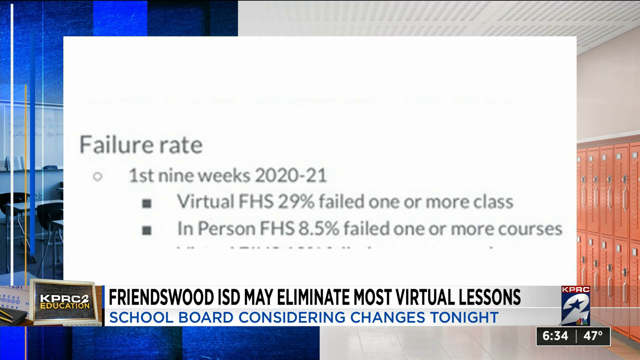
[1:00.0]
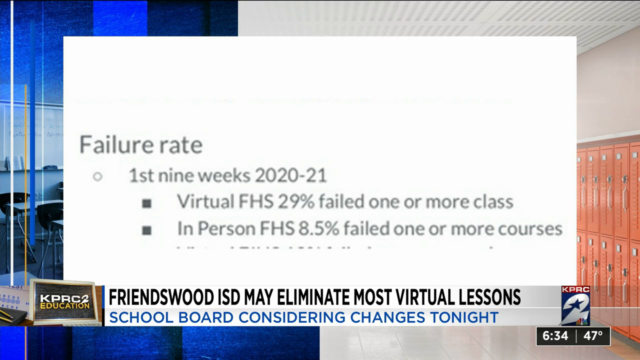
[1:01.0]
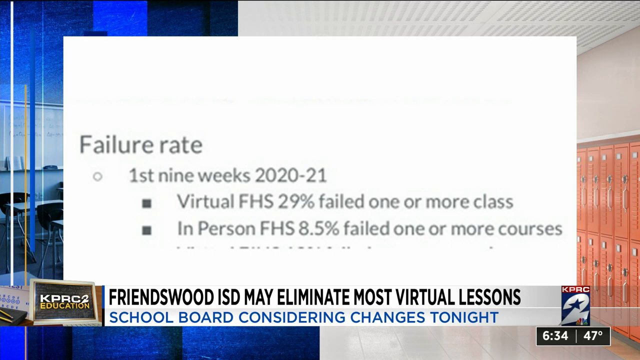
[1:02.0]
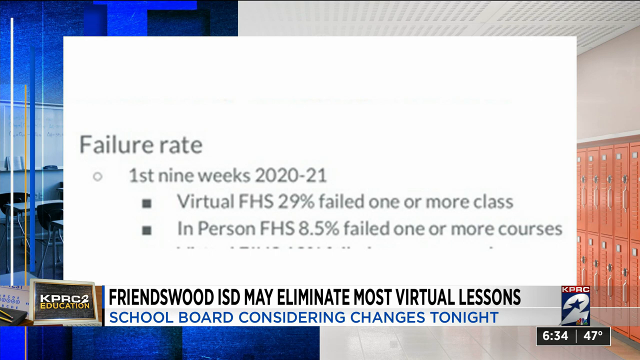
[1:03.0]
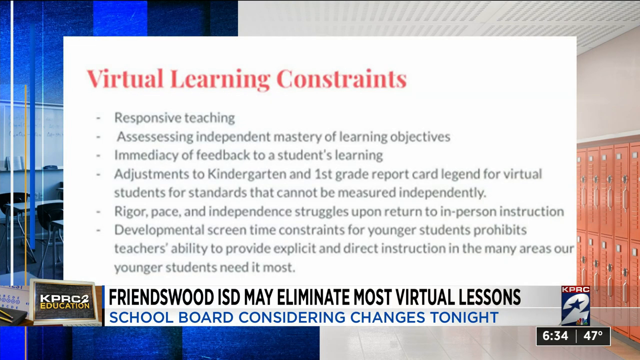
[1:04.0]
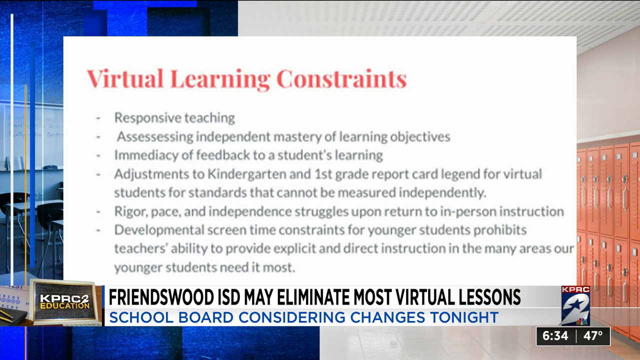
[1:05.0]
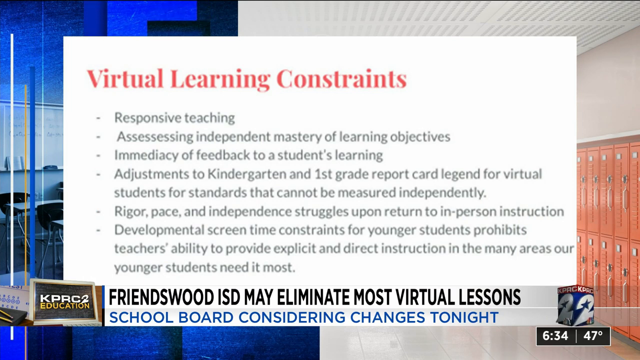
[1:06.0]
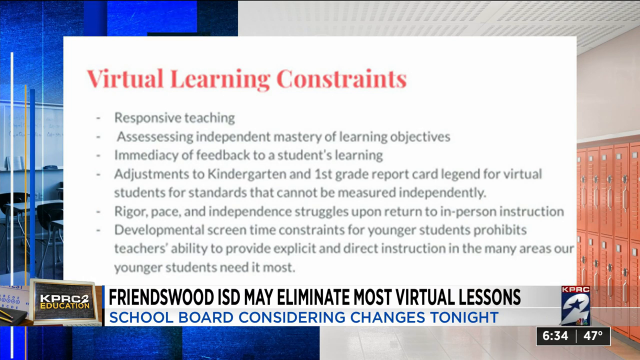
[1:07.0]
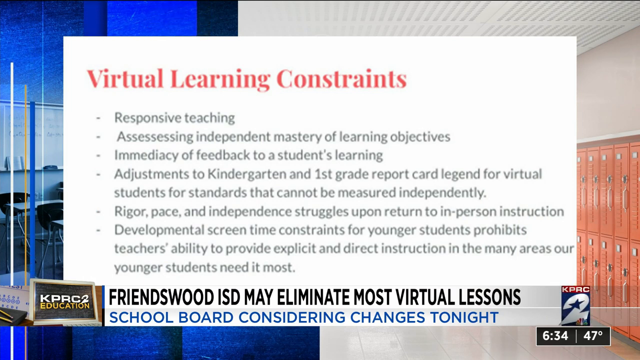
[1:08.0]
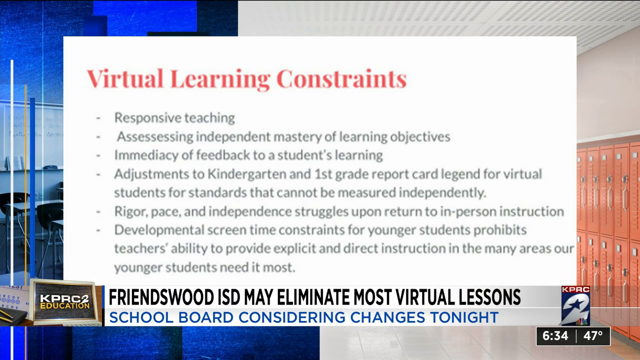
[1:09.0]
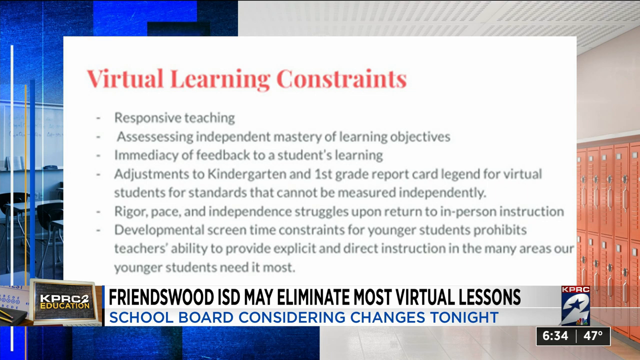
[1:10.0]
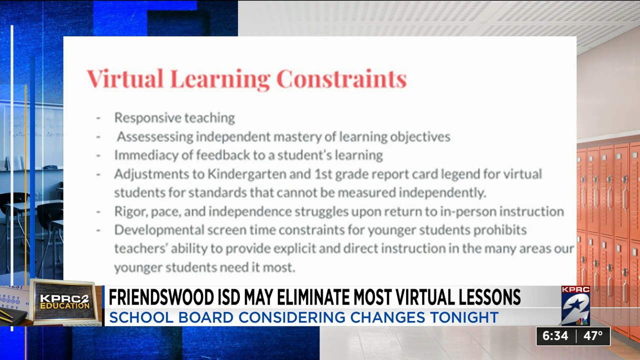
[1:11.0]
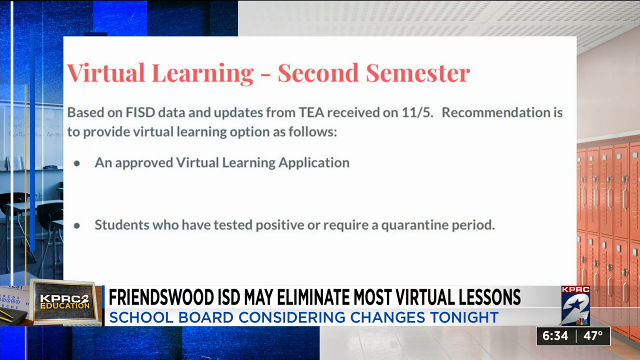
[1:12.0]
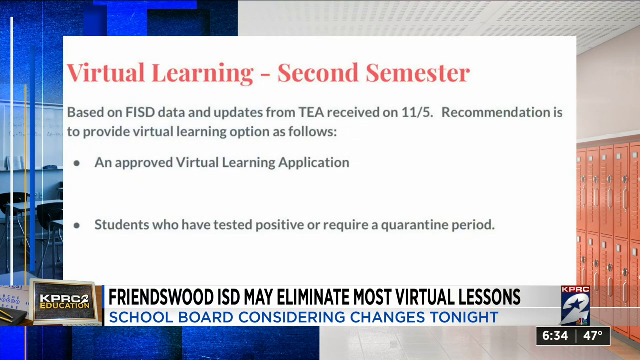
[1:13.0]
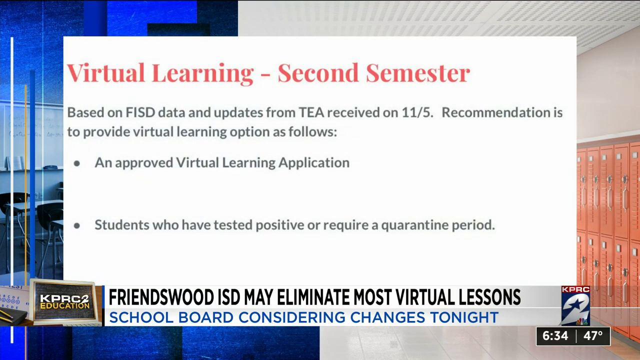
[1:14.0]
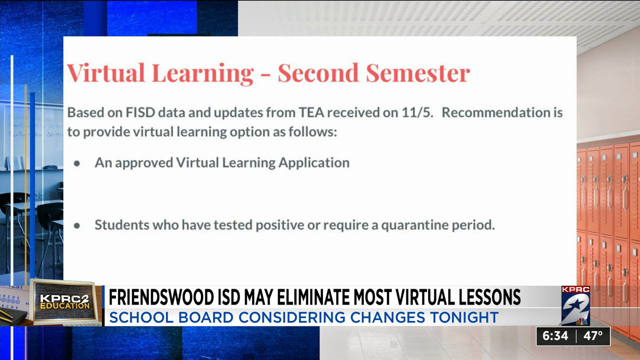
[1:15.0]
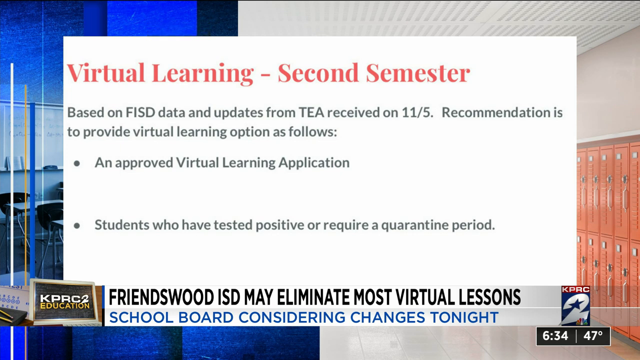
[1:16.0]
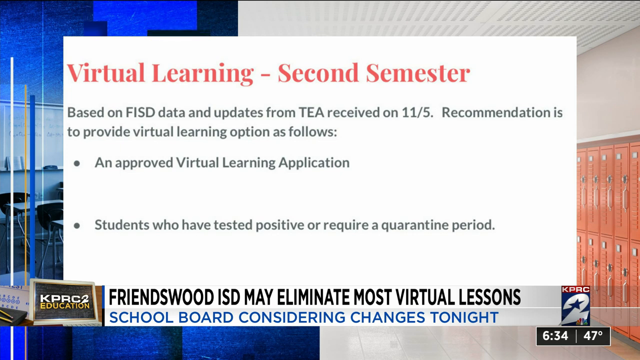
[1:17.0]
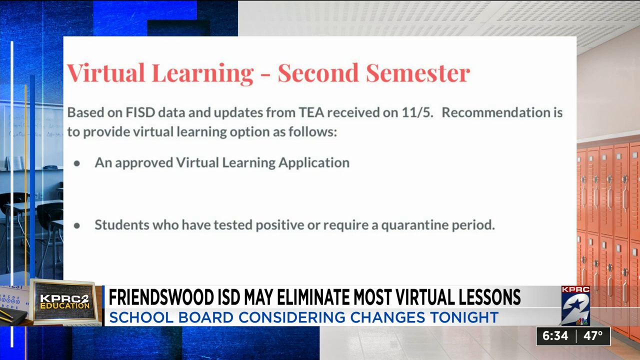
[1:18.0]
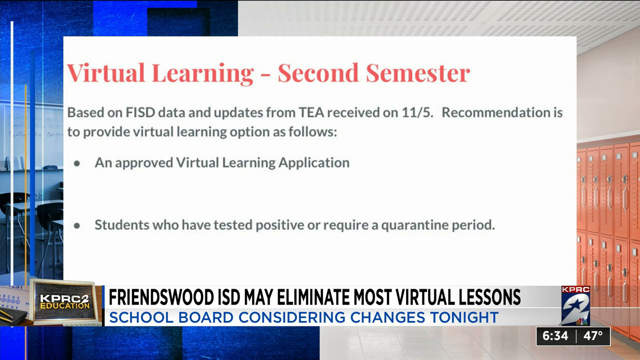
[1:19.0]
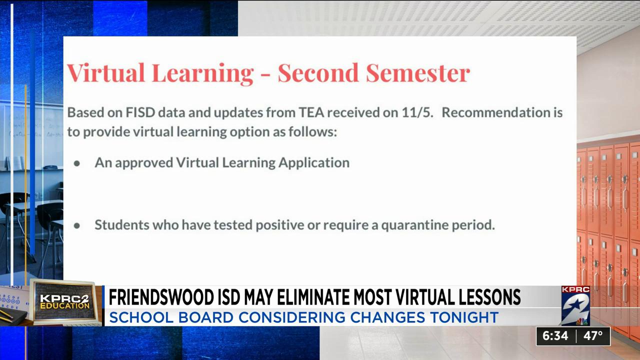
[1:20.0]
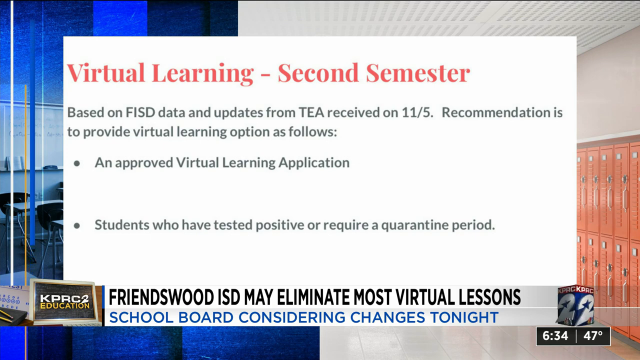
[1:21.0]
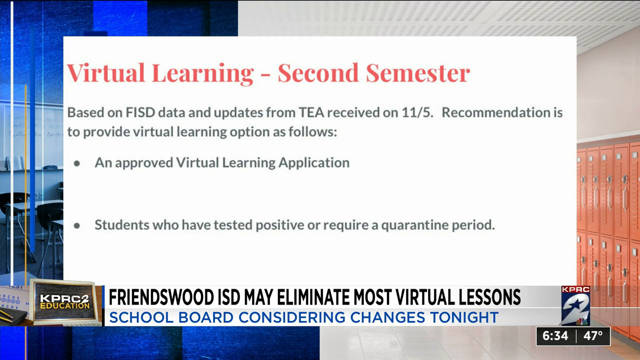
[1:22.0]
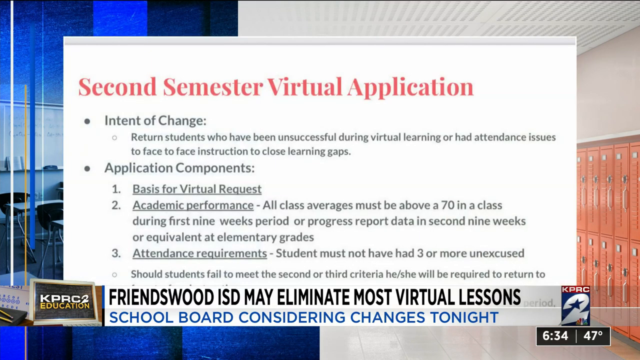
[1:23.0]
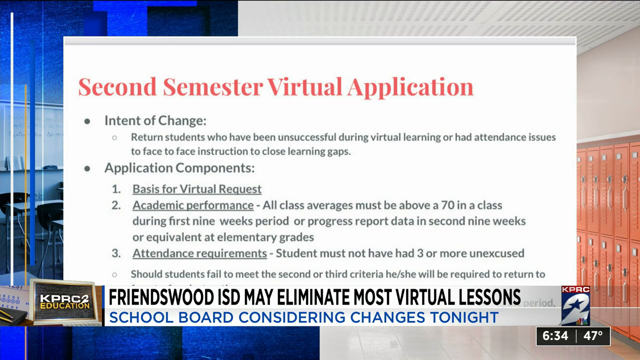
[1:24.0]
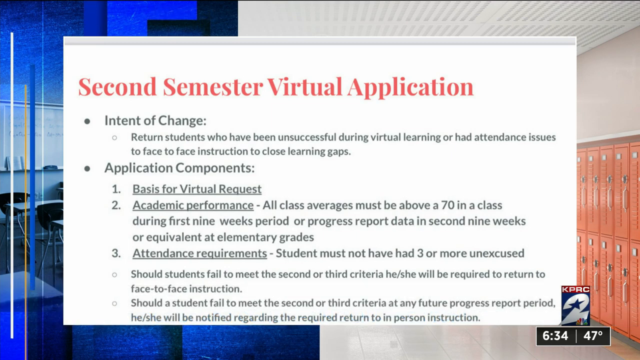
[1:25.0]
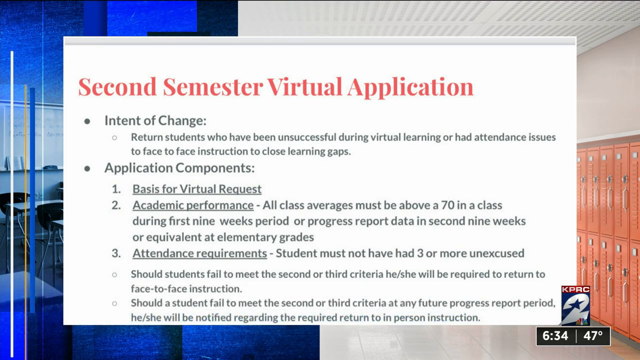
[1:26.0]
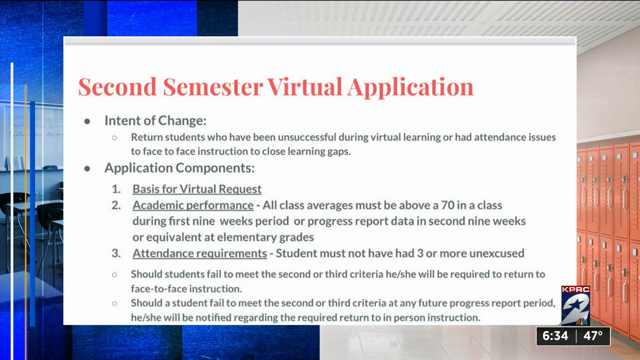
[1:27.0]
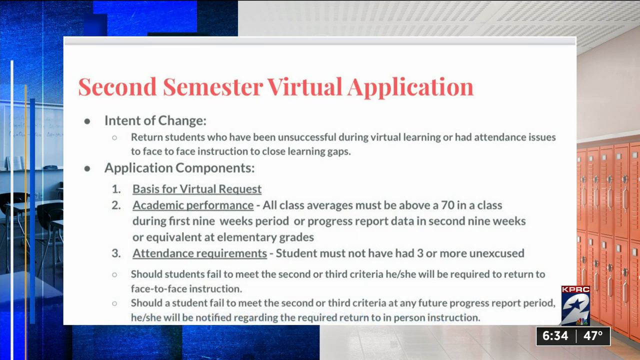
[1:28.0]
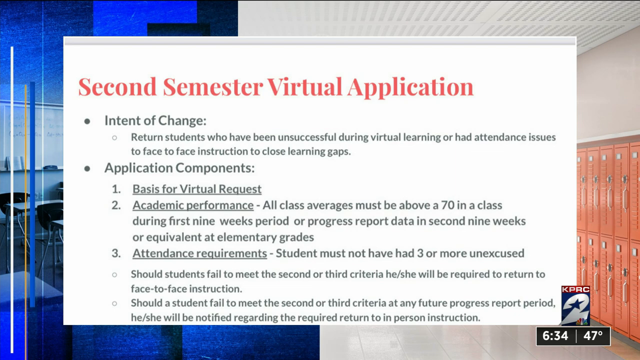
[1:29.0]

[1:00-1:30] The same failure rate graphic is shown. Next comes another slide about virtual learning constraints with multiple bullet points: responsive teaching; assessing independent mastery of learning objectives; immediacy of feedback to a student's learning; adjustments to kindergarten and first grade report card legend for virtual students for standards that cannot be measured independently; rigor, pace, and independent struggles; and developmental screen time constraints for younger students. After that, another slide about virtual learning in the second semester reads "based on FISD data and updates, a recommendation is to provide virtual learning option as followed," listing an approved virtual learning application, the student having tested positive, or a required quarantine period.